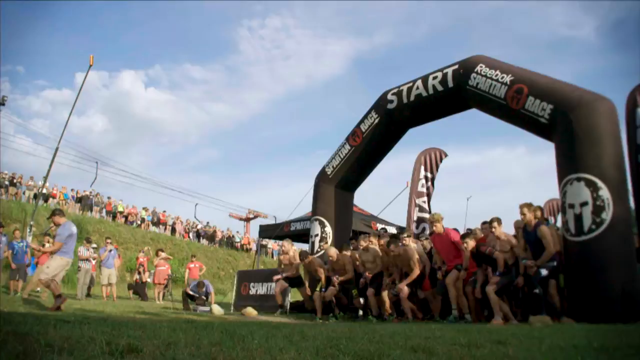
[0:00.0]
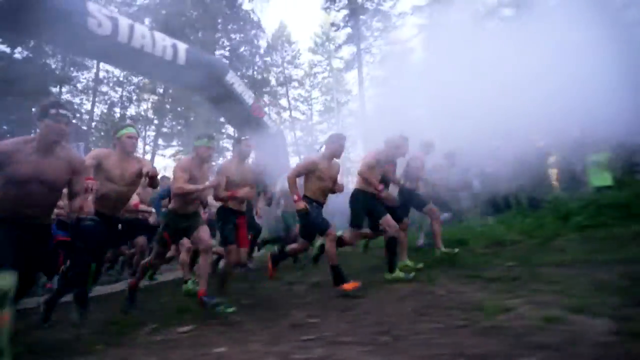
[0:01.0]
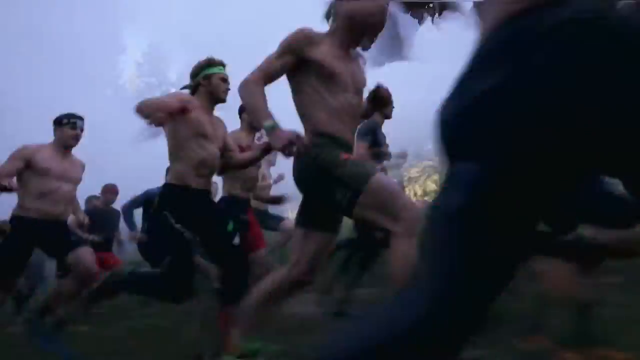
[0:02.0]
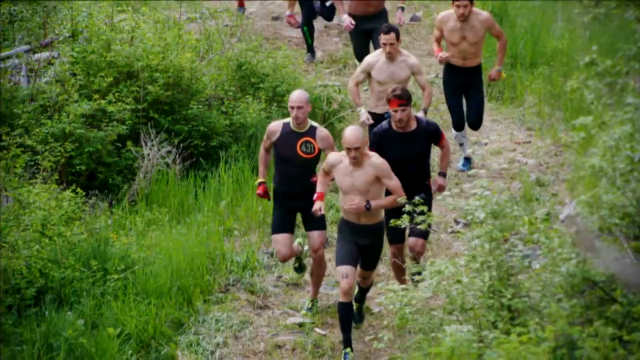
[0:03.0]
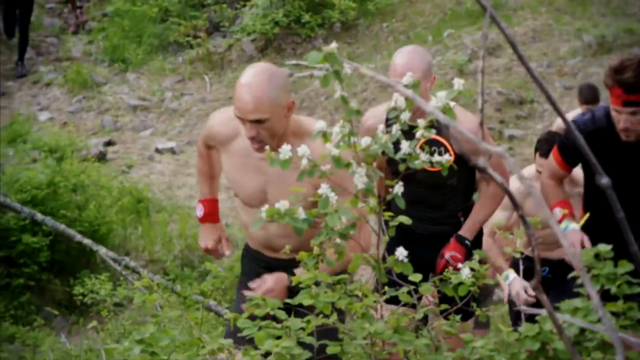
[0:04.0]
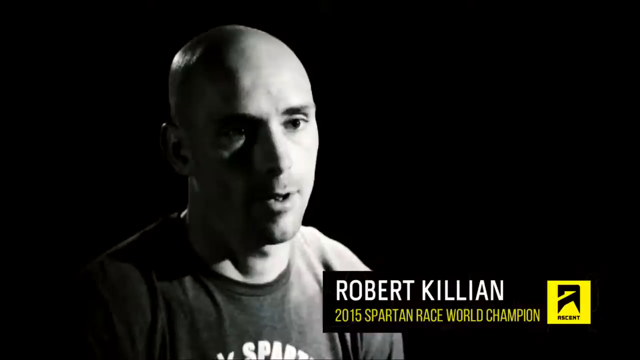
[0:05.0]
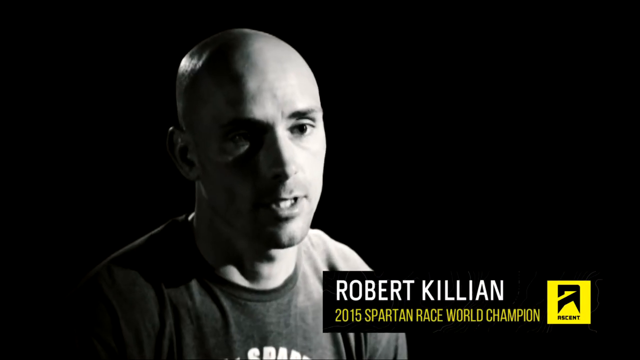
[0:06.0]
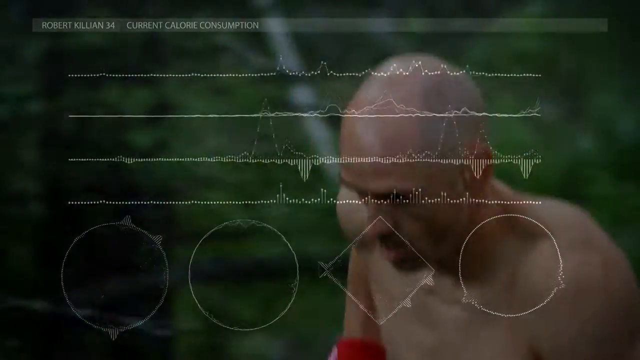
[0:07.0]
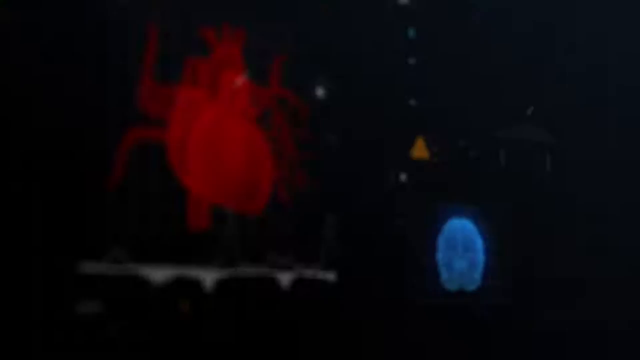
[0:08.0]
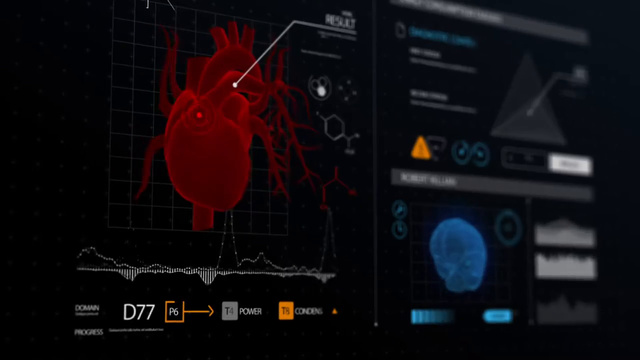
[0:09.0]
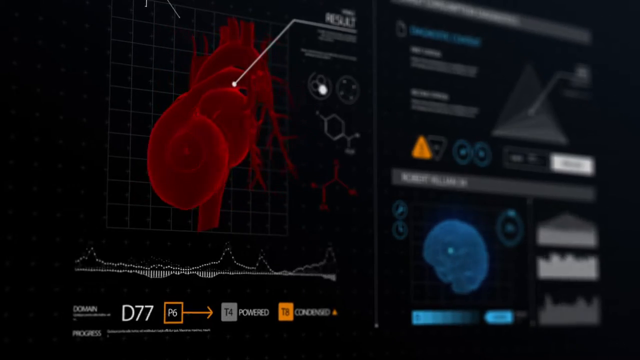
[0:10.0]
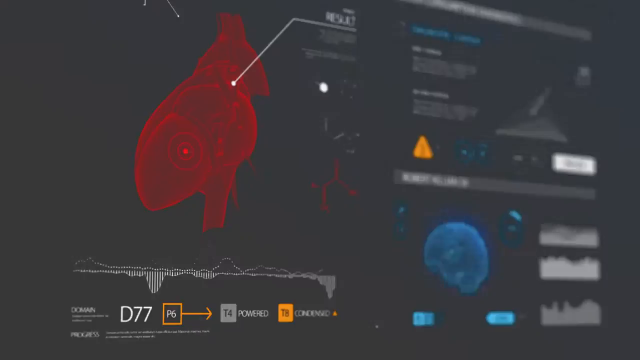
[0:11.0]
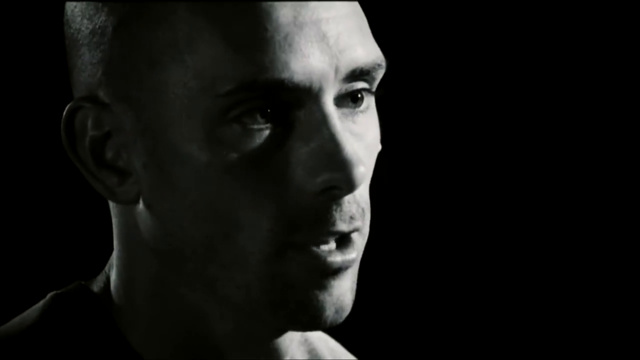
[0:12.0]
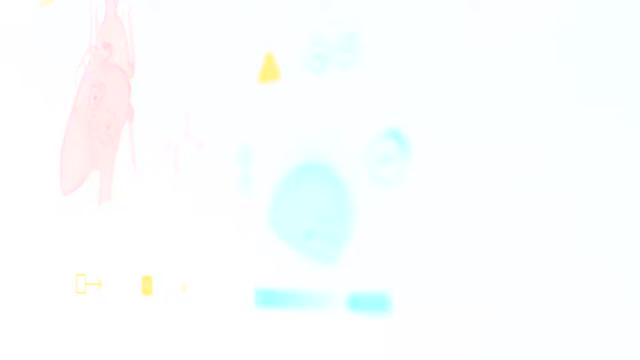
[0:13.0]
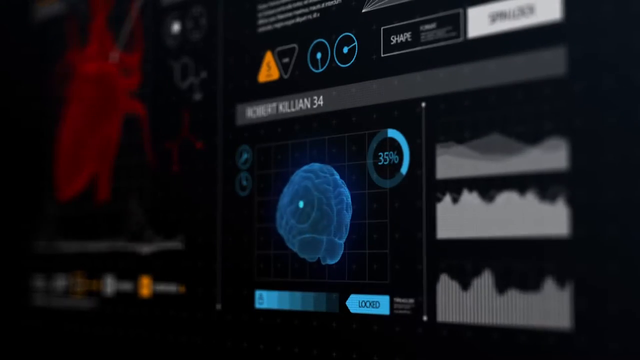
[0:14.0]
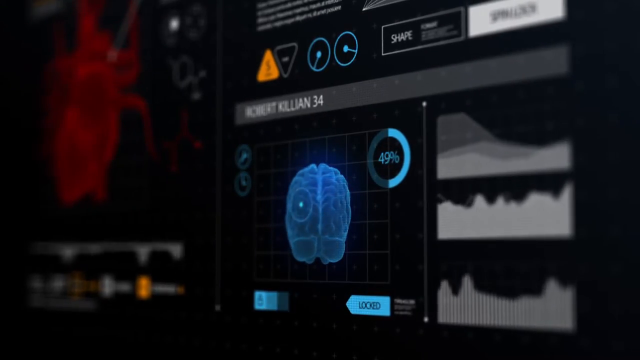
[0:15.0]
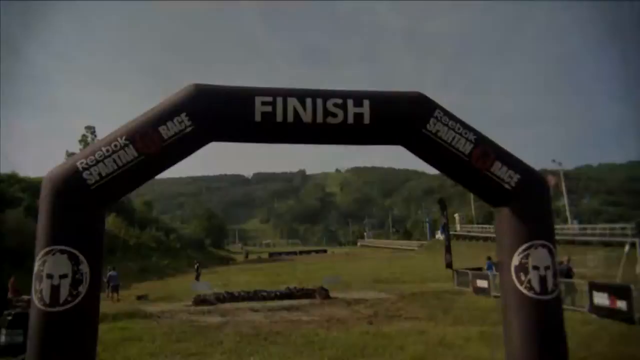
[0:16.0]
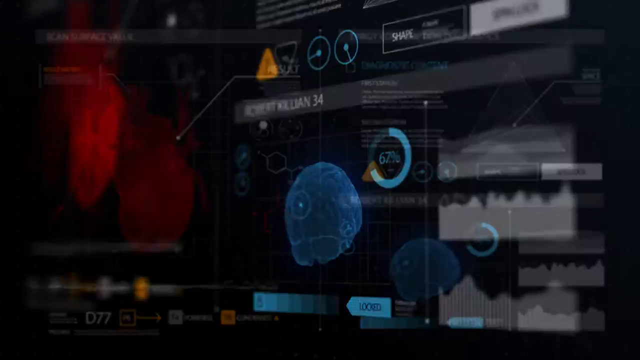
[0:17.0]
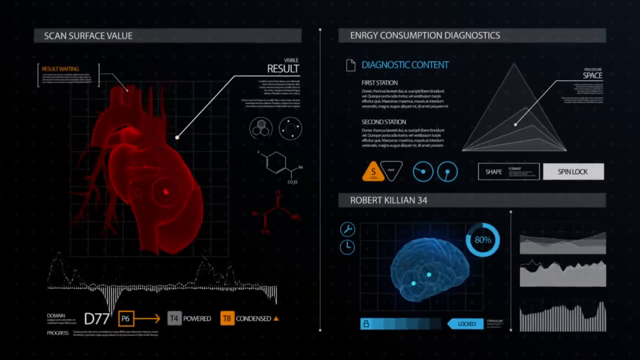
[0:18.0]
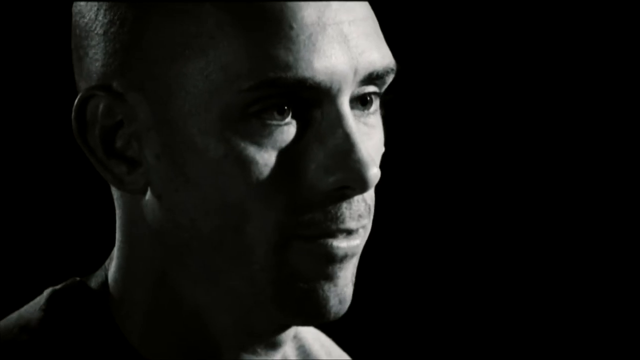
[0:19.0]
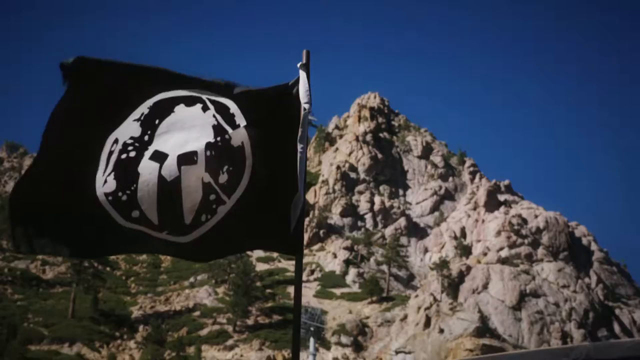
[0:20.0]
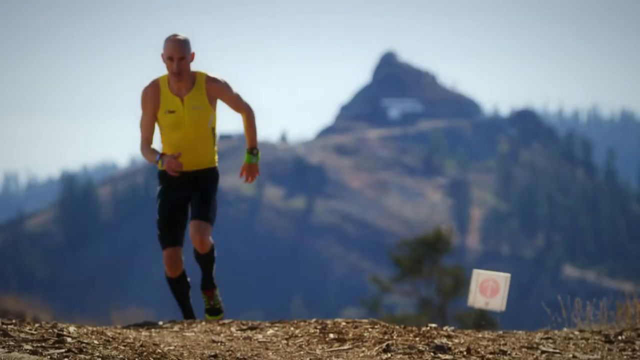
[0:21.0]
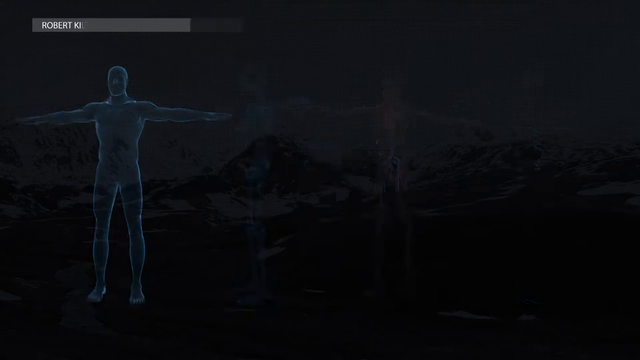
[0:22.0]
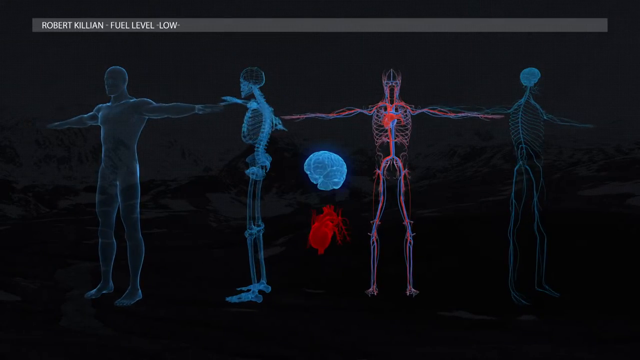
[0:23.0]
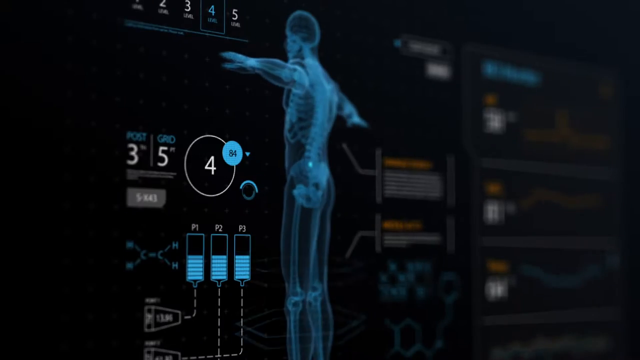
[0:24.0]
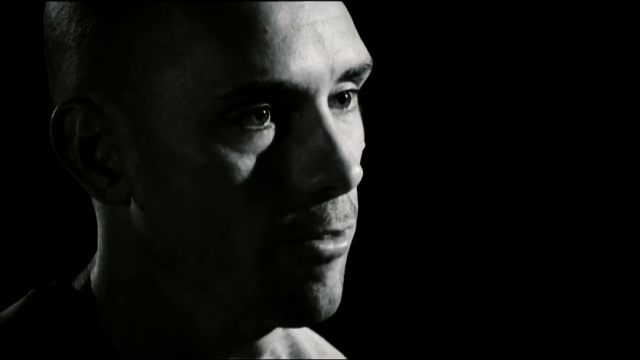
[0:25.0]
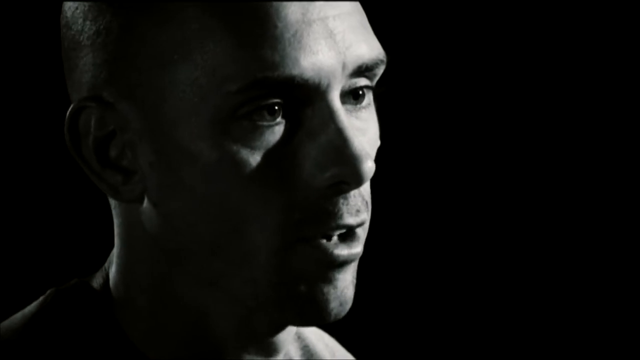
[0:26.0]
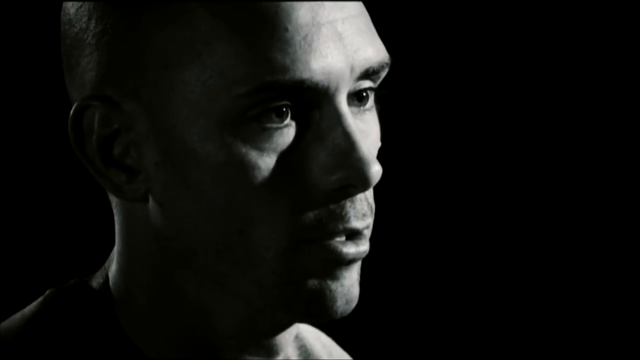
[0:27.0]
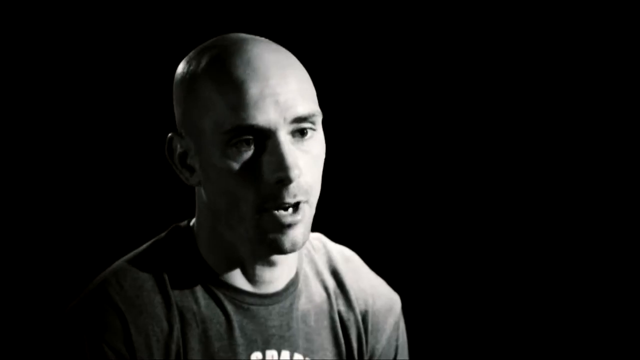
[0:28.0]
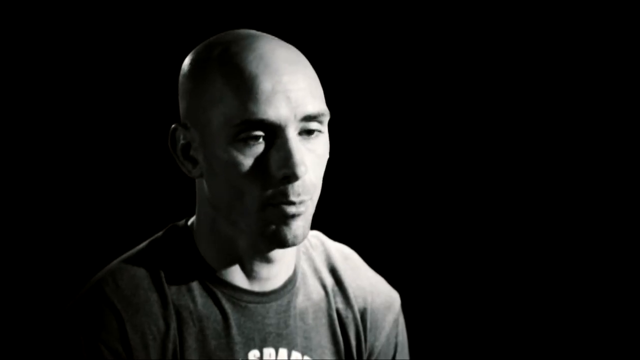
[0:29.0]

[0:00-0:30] A group of men stands at a starting line, with a kind of black oval shape over top of them; they appear ready for the gun to go off to begin running. Several of them have no shirts on, and they wear black shorts. The angle changes and smoke goes off in the background. The setting is outdoors, with large trees in the background, and the runners start to run off. The video jumps quickly from angle to angle: a side view of the runners starting to run, then a front angle of a dirt path where some runners come toward the camera in slow motion, then a sort of overhead angle from the right of one specific runner going up a hill in slow motion. Next comes what looks almost like an interview against a black background, with a bald white man being interviewed. Apparently his name is Robert Killian and he is in the 2015 Spartan Race World Championship; it looks like he was a world champion in 2015. The video then transitions to a close-up of him going up a hill, with computerized vitals shown, something like heart rate: four different readouts going up and down, almost like a heart rate. It quickly cuts to a computer screen with a computerized picture of a heart on the left, circulating right to left, and text and lines going in different directions on the right. The video cuts very quickly to the starting point outside, back to the computer screen, and then to a side angle of him carrying something, moving left to right. Other photographs of him running up the hill pop up here and there. It returns to him being photographed, and then to the initial starting point of the Reebok Spartan Race.